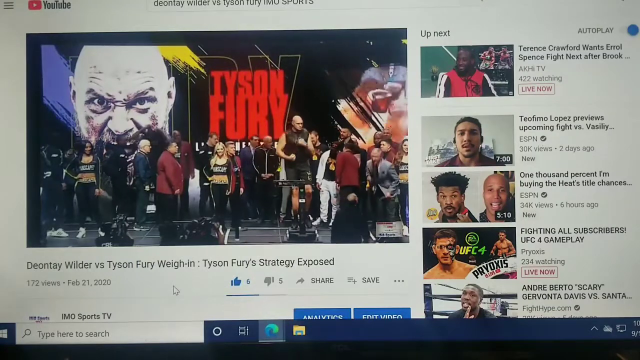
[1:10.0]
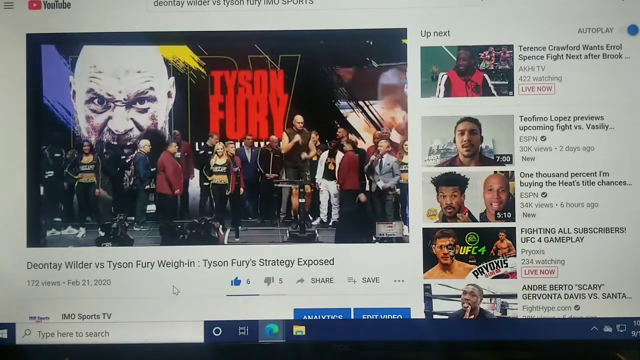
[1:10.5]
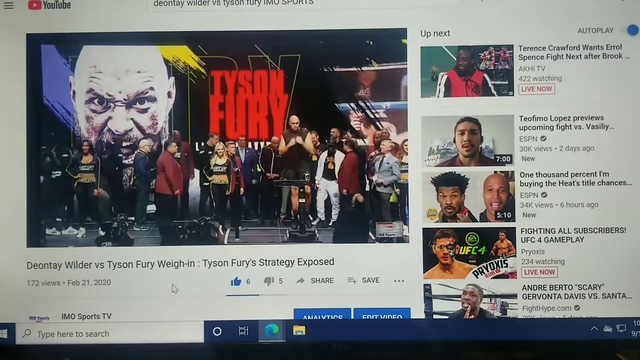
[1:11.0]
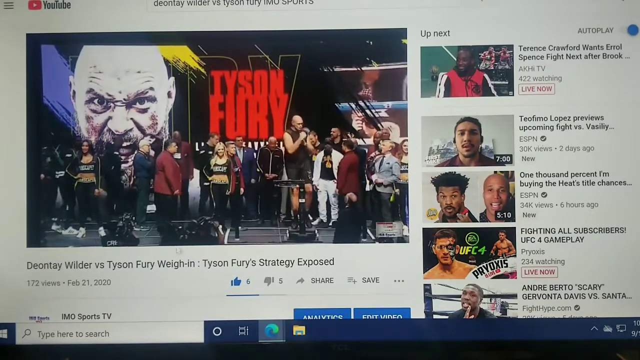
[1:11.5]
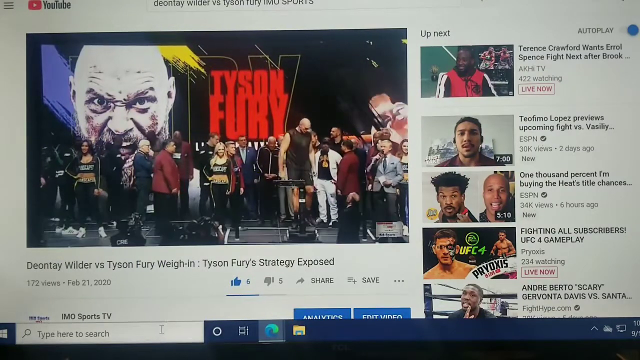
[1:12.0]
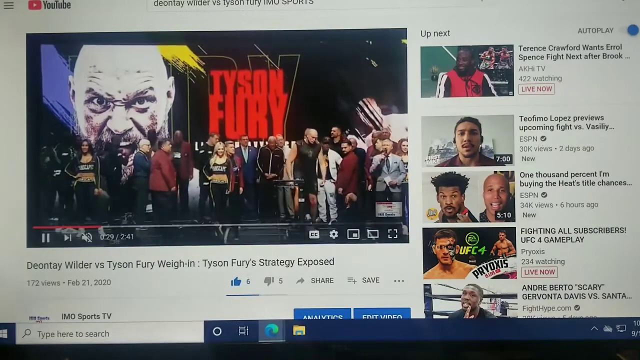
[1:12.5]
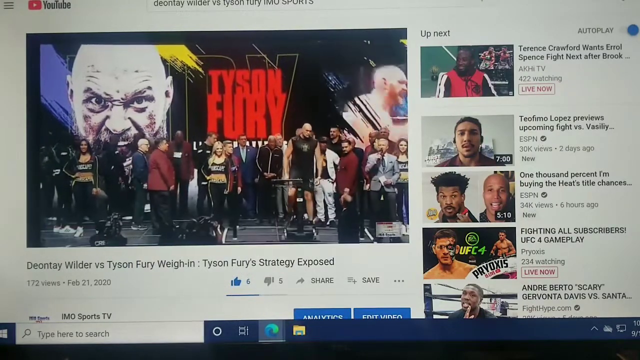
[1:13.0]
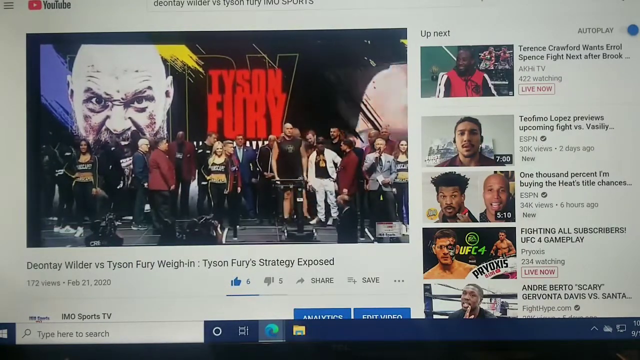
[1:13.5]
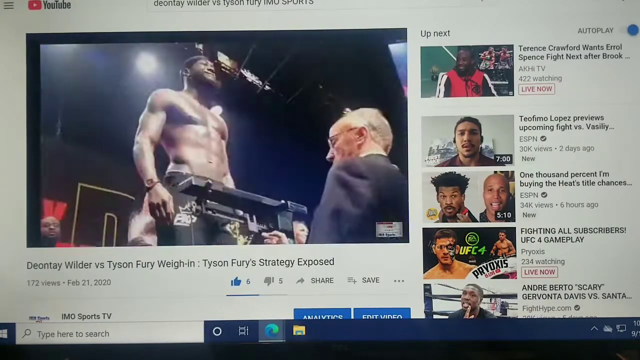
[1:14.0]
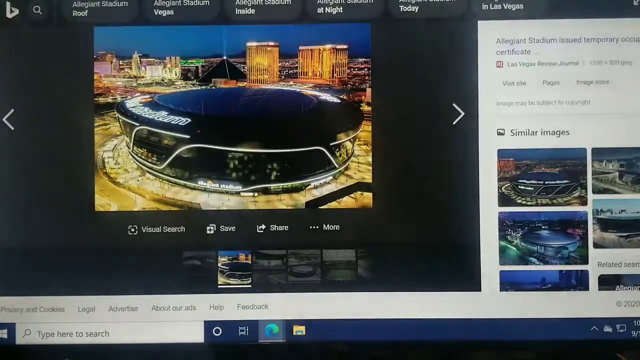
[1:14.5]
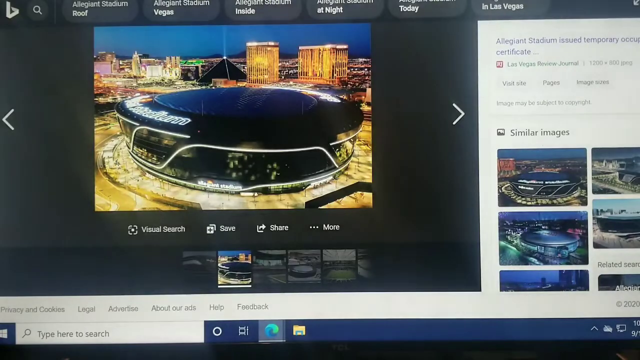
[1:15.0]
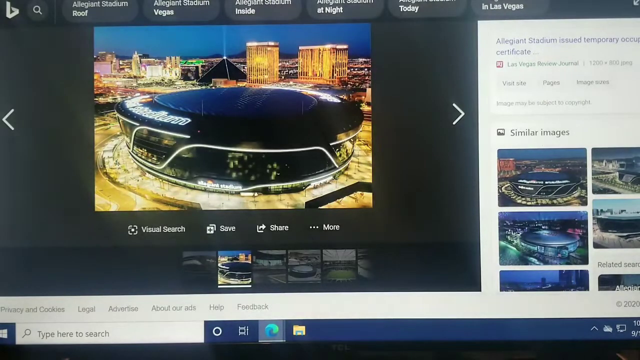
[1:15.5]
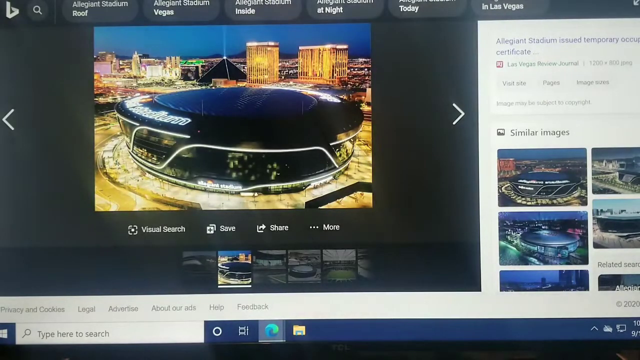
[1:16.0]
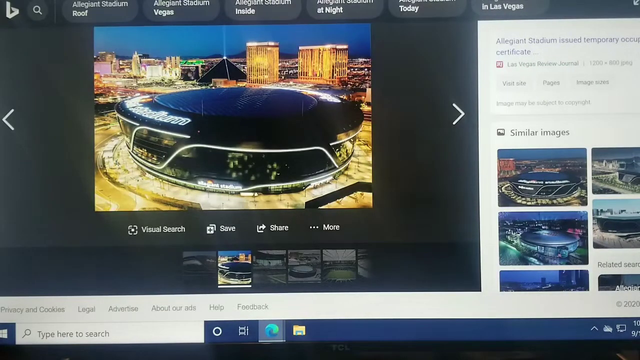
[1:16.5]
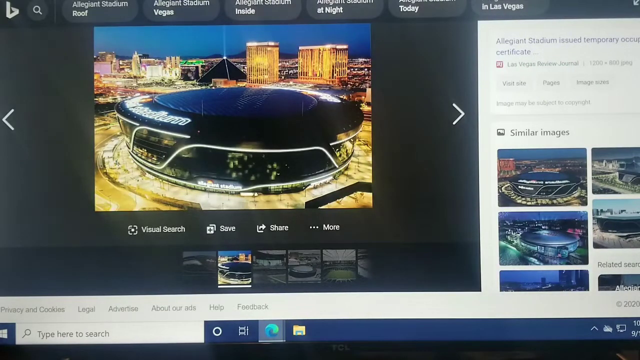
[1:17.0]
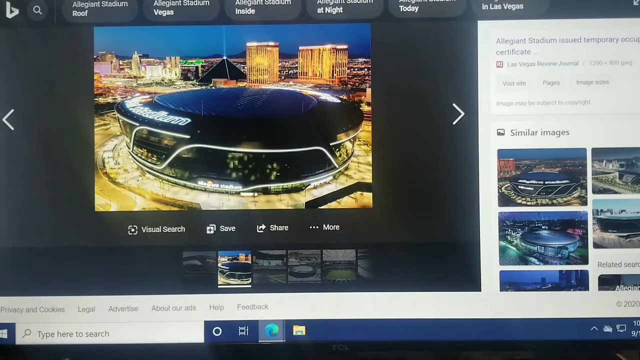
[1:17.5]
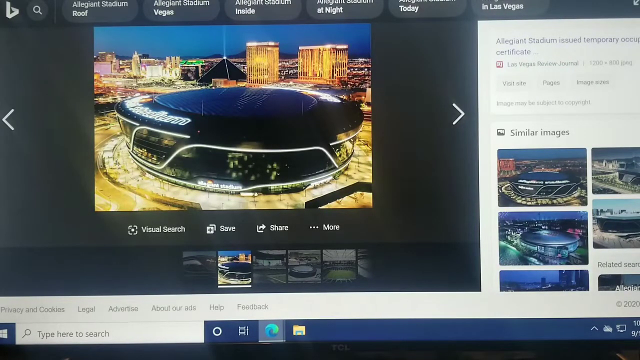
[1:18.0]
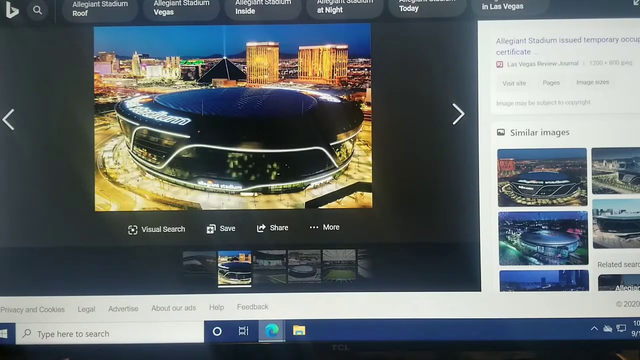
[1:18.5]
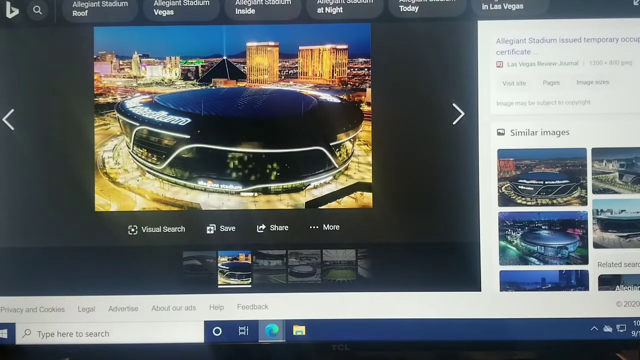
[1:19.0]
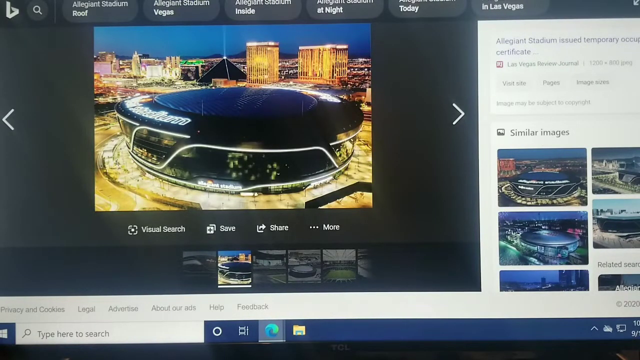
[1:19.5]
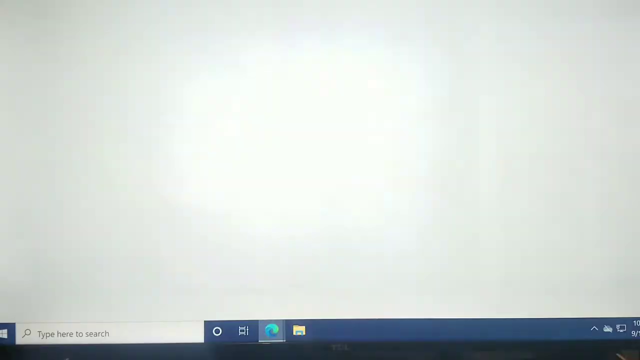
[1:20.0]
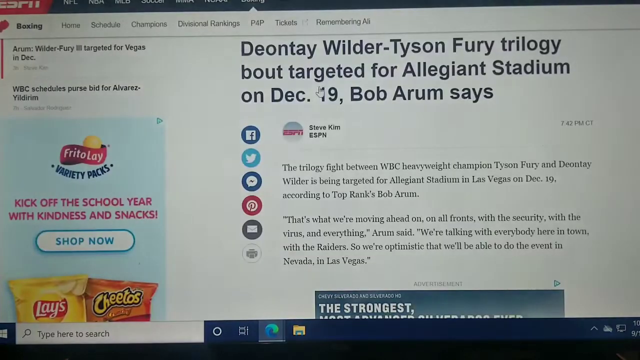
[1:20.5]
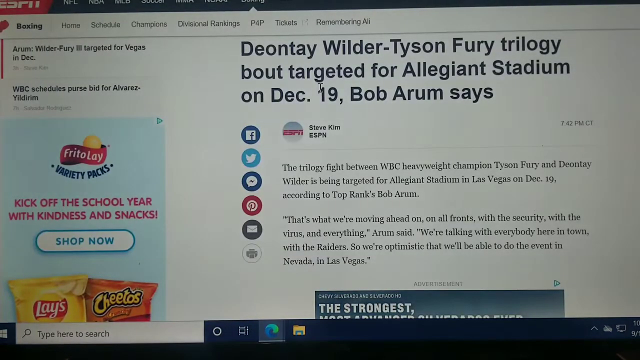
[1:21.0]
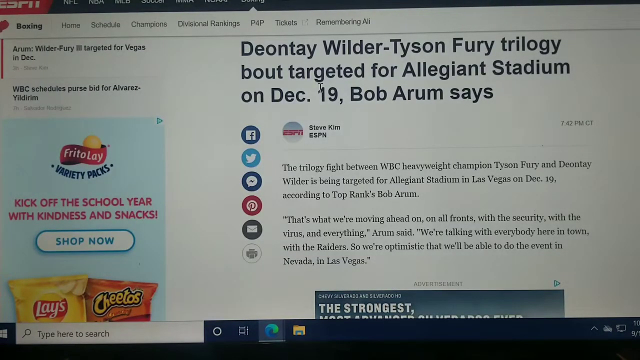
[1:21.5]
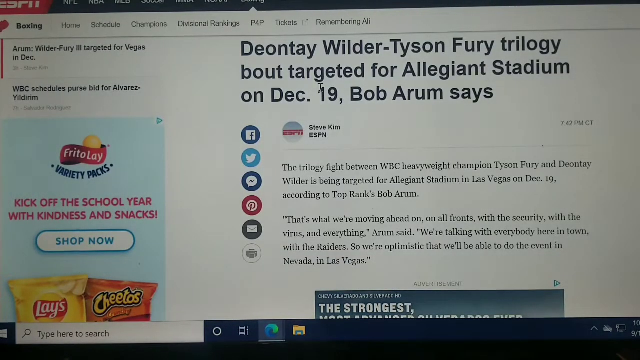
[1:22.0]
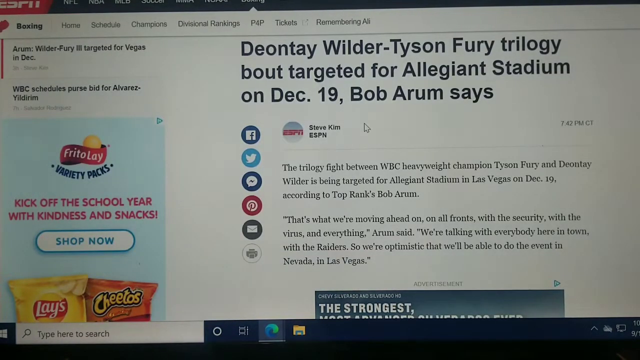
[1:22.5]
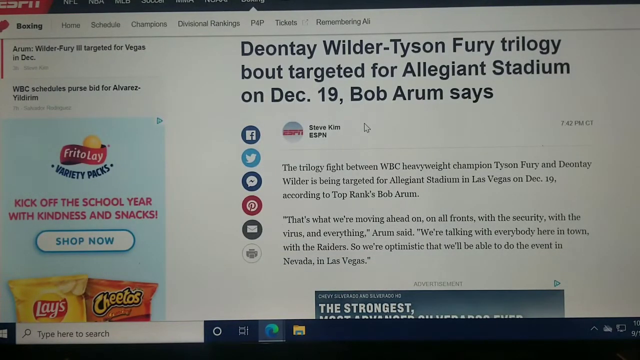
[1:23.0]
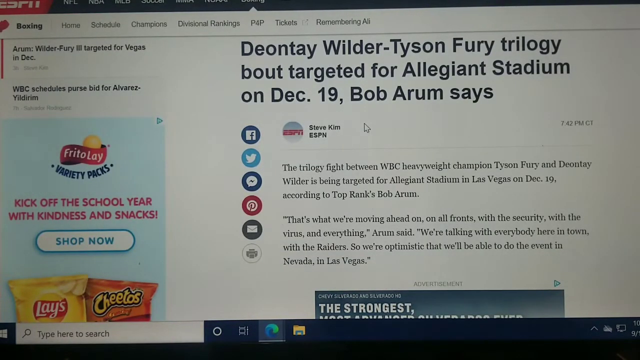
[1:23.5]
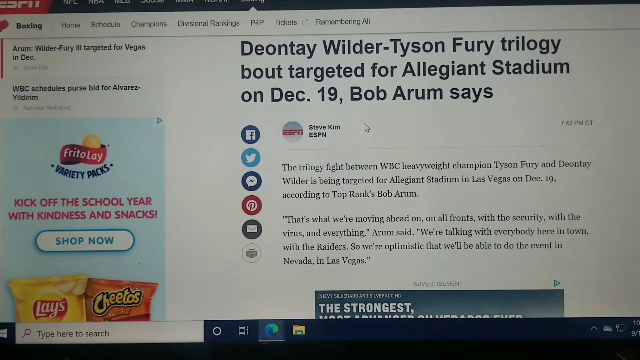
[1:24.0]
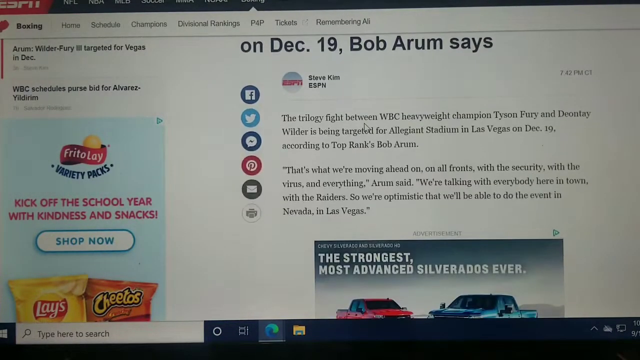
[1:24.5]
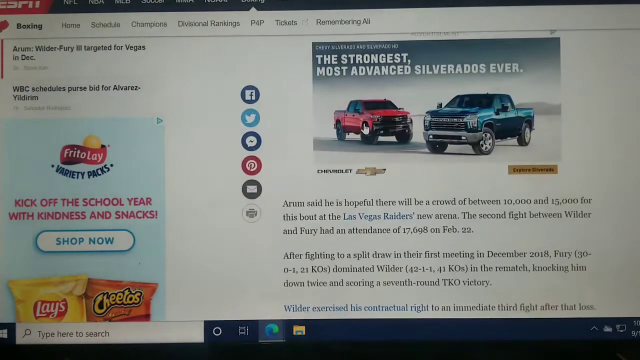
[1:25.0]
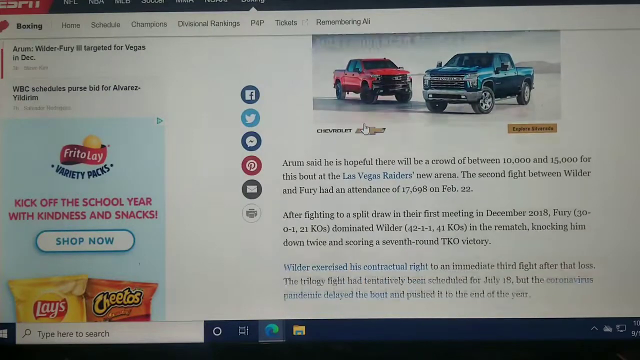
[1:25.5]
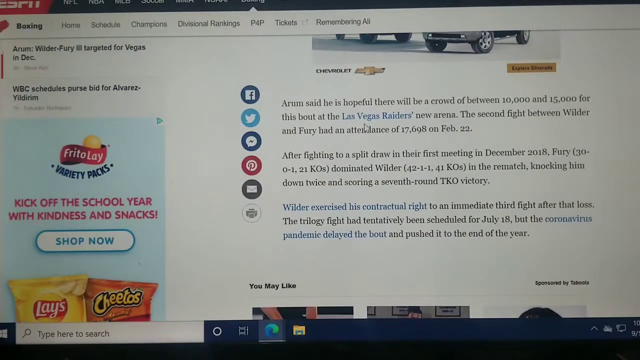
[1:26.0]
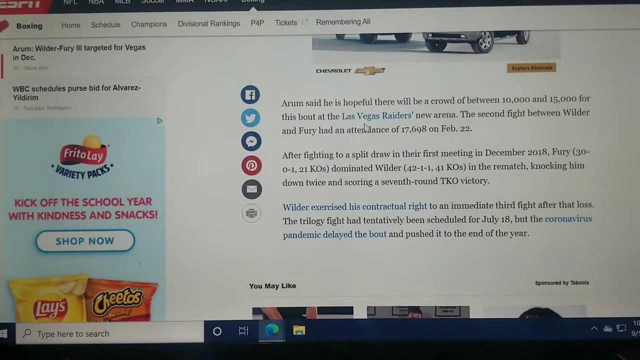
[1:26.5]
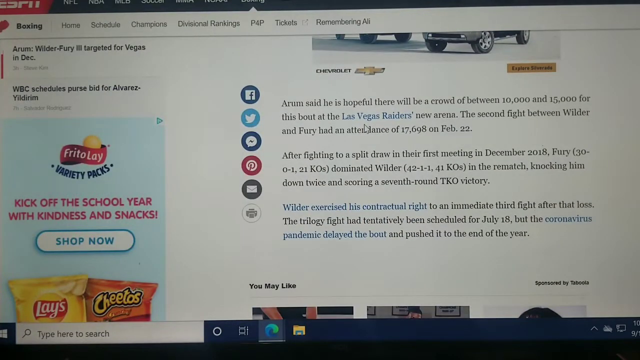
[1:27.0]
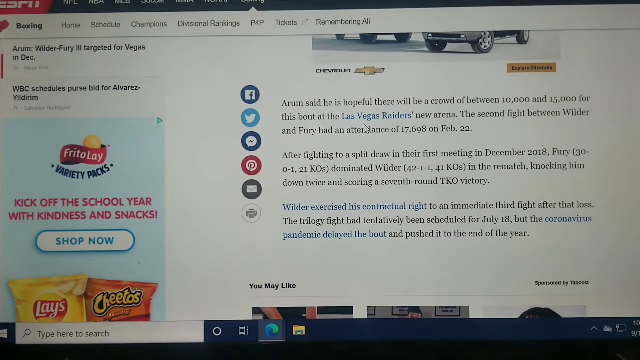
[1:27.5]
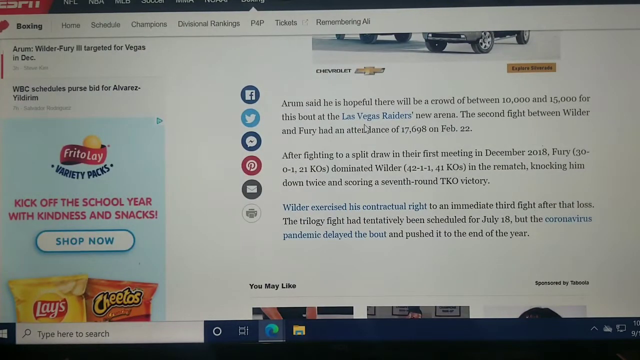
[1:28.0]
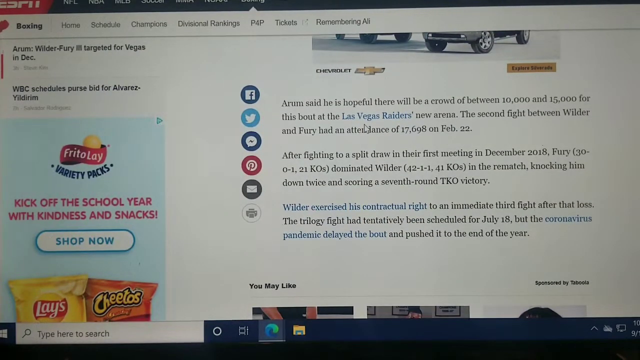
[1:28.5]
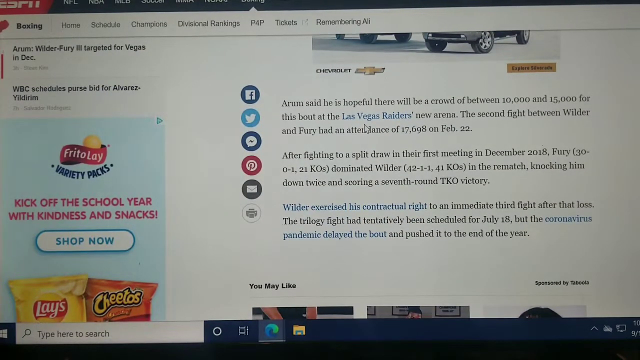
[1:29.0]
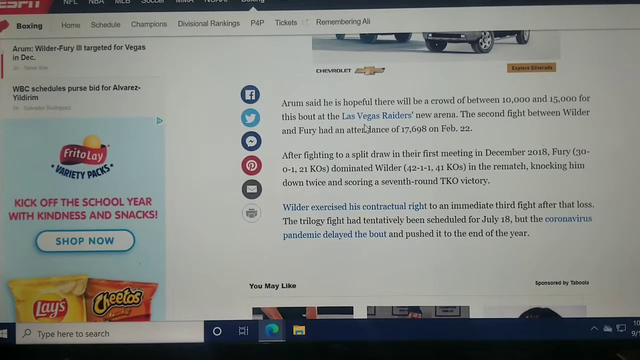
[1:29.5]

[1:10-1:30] Someone is recording their computer with YouTube pulled up. The YouTube video is titled "Deontay Wilder vs. Tyson Fury Weigh In. Tyson Fury's Strategy Exposed." Play has already been hit, and the mouse moves over the YouTube page. On the stage is Tyson Fury, very tall, bald, and very muscular, with a whole crowd of people up on the stage with him. Behind him on a very large screen is his face with his name, Tyson Fury, in red. A quick camera angle shows Tyson Fury from the ground before the video changes to something else. The person recording then appears to use the mouse cursor to go to a website that is not a video site.